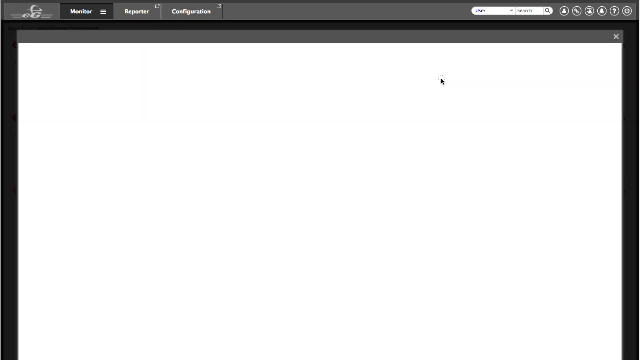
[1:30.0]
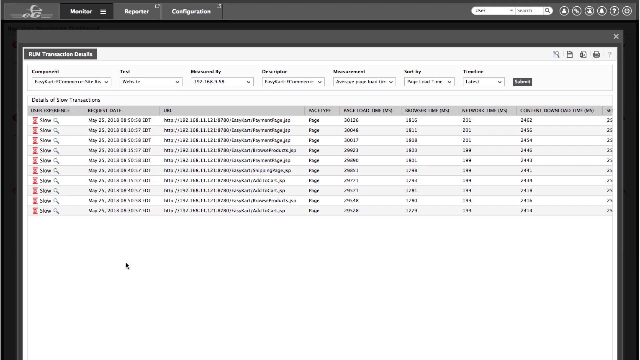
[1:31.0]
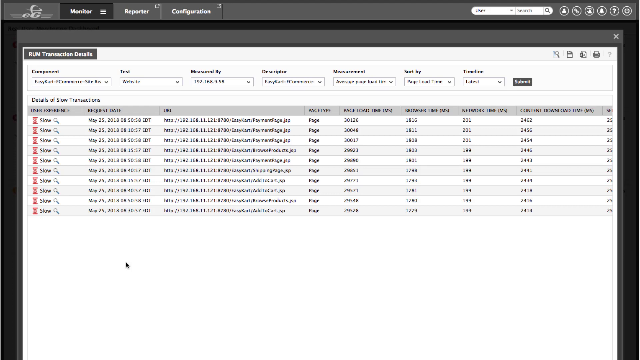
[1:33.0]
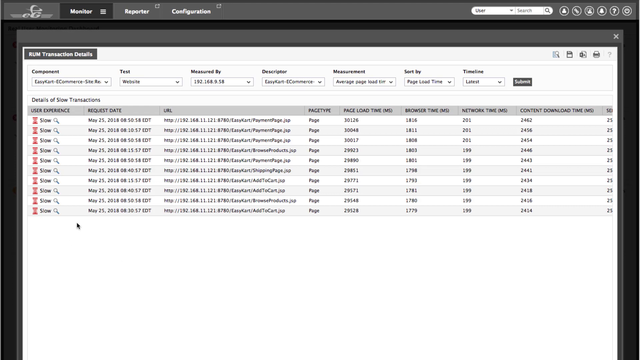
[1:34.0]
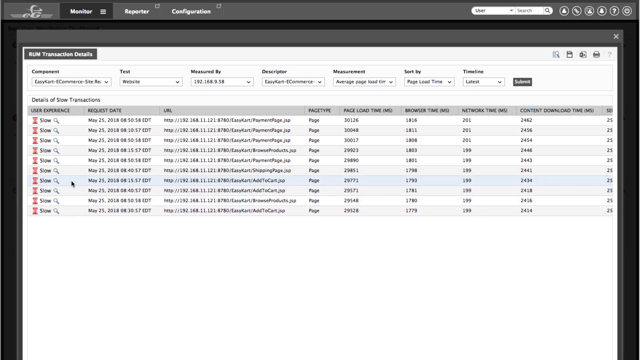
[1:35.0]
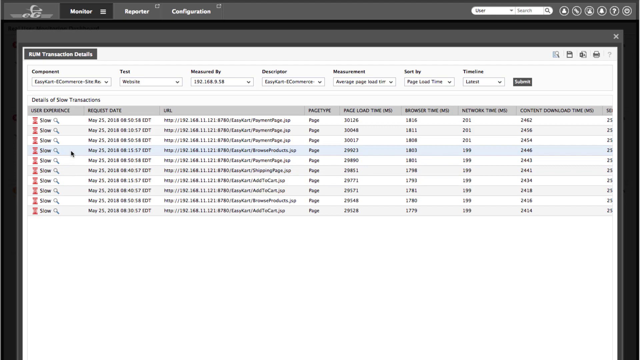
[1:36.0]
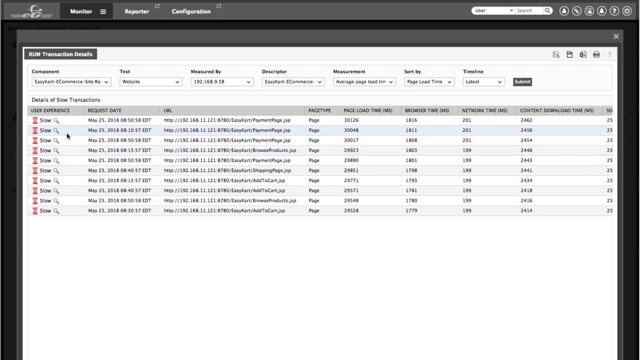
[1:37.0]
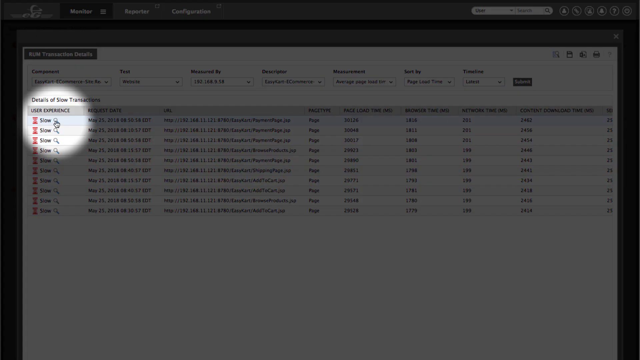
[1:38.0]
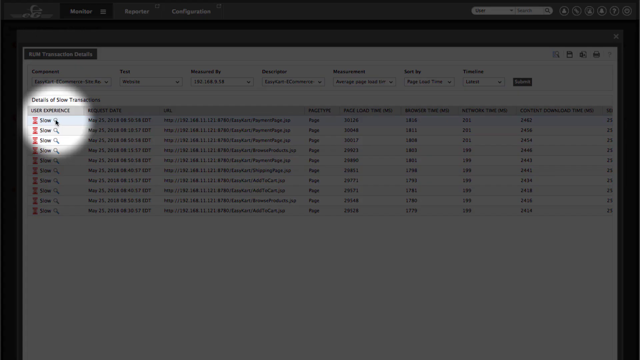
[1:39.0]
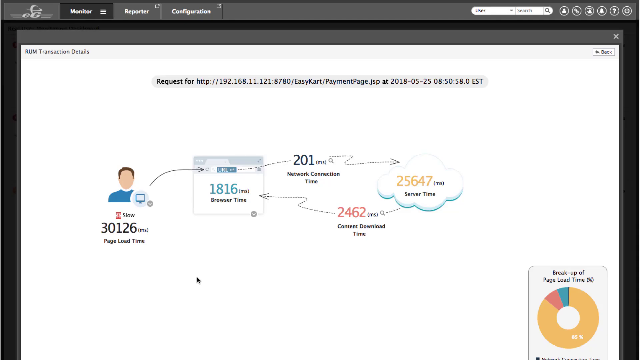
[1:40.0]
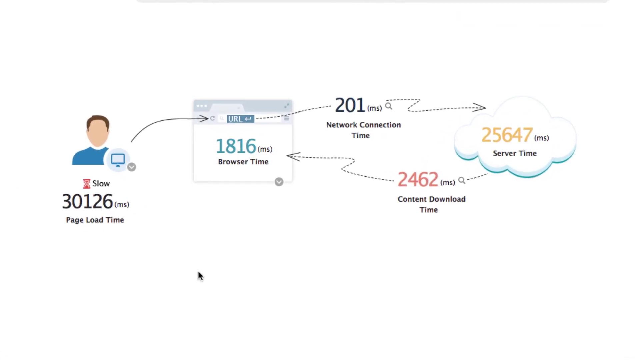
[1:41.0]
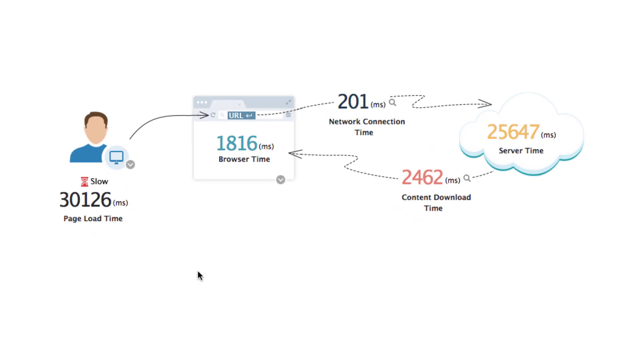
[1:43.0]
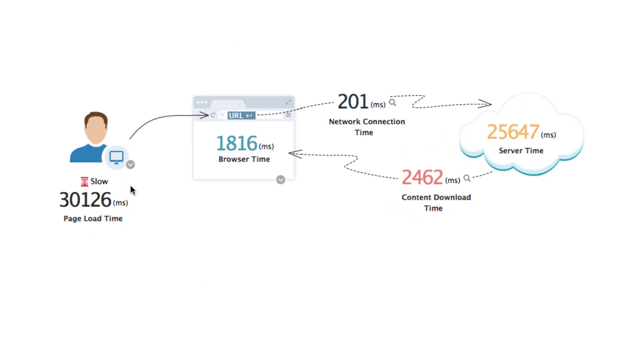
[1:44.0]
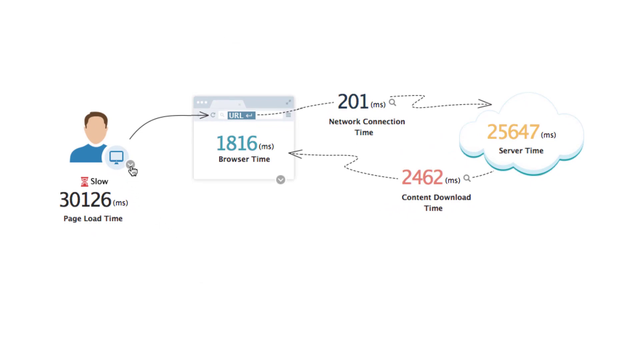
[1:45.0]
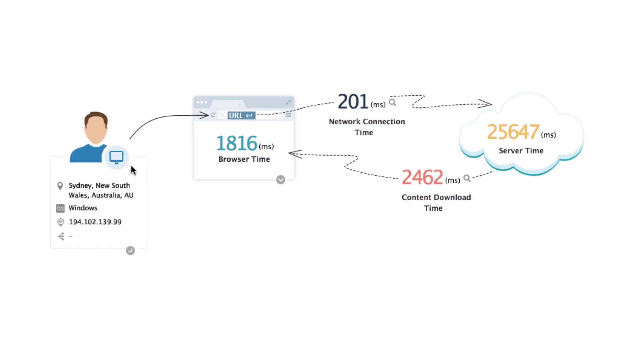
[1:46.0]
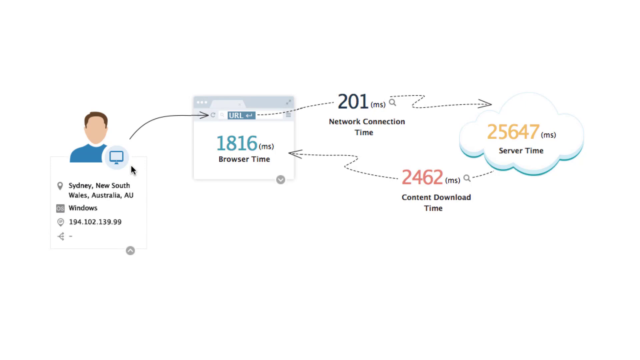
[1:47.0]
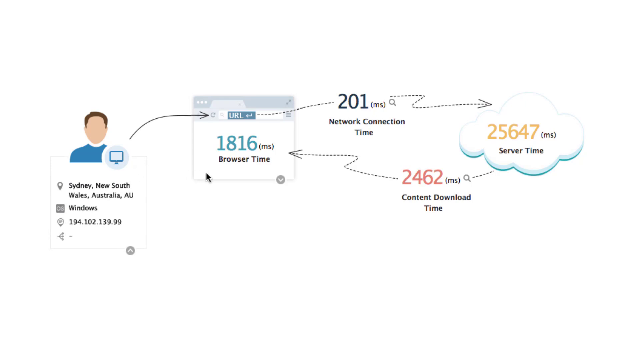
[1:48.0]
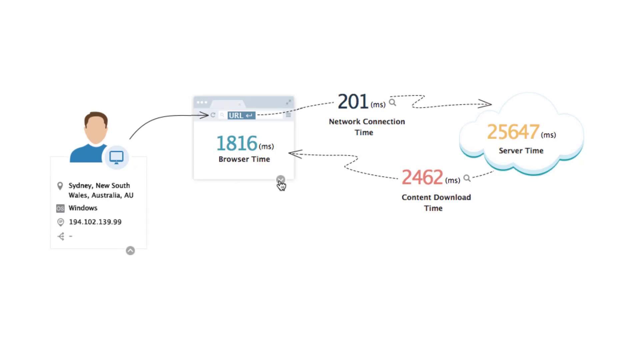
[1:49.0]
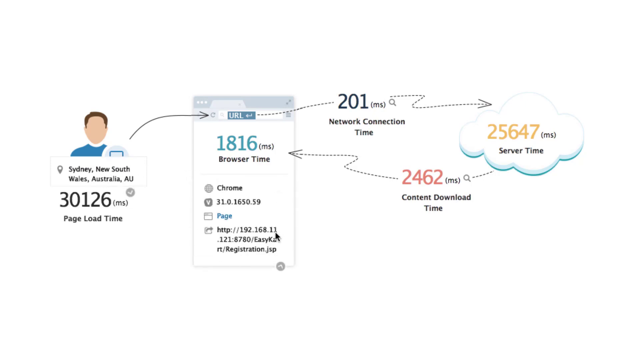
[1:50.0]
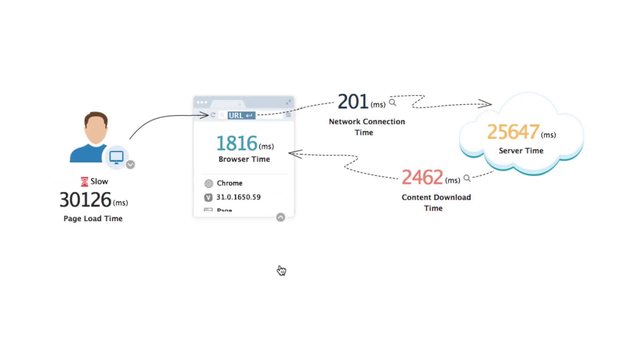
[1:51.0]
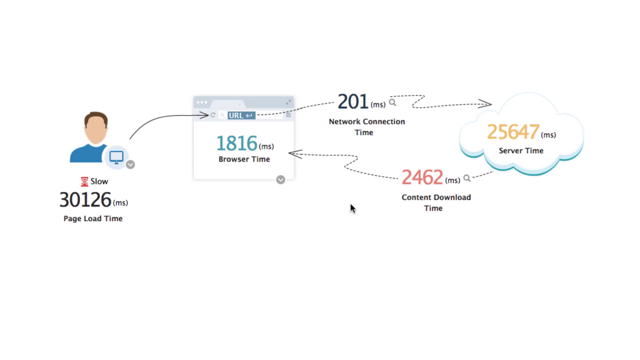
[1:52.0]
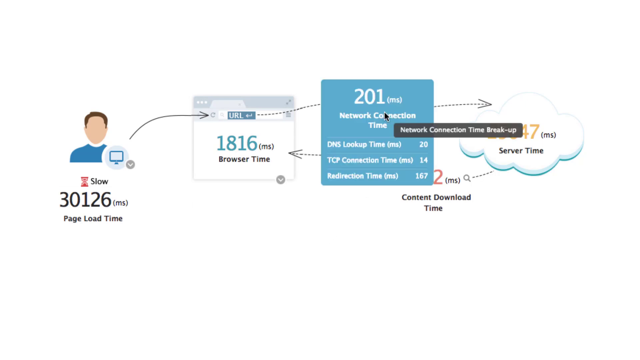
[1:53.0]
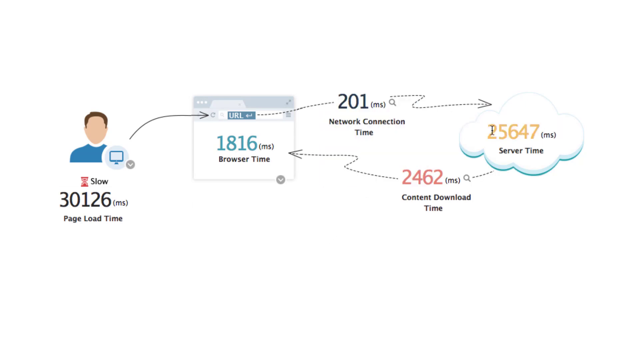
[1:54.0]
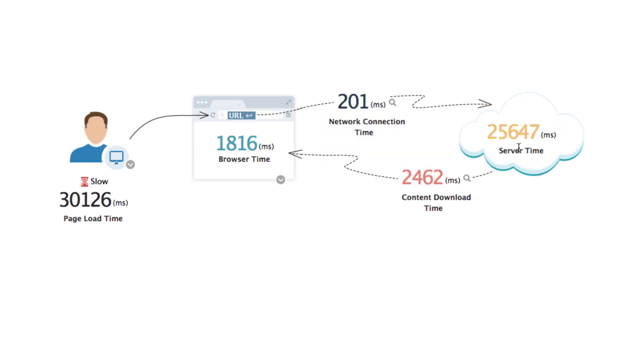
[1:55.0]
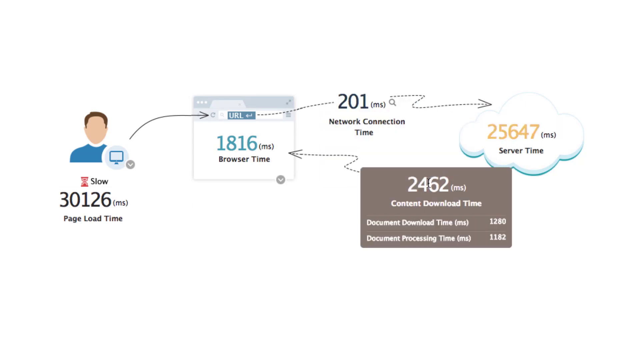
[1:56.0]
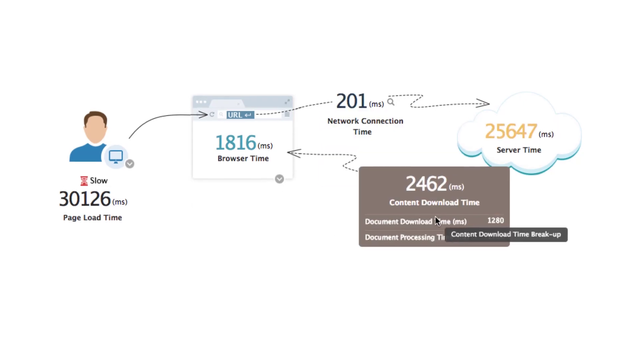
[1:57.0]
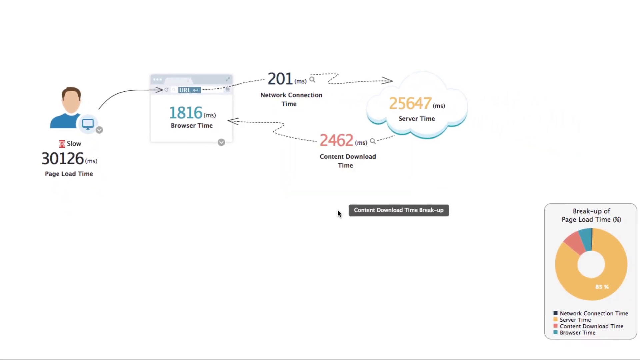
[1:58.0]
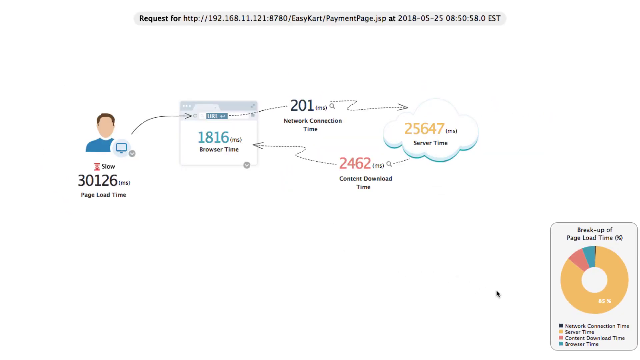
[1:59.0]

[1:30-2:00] The video transitions to another page titled "RUM Transaction Details" at the top left, with a list of 10 user experiences below it and other information such as request date, URL, page type, page load time, and others. The black mouse cursor starts in the bottom third on the left, moves up the list, and hovers over a magnifying glass to the right of the word "Slow" on the first item in the list. It clicks the magnifying glass icon, which opens another page showing information about the connection speed. Under a clipart of a faceless person it says "Slow" and "30126 ms" page load time. A dropdown arrow is then clicked, showing that this information comes from Sydney, Australia on a Windows computer.